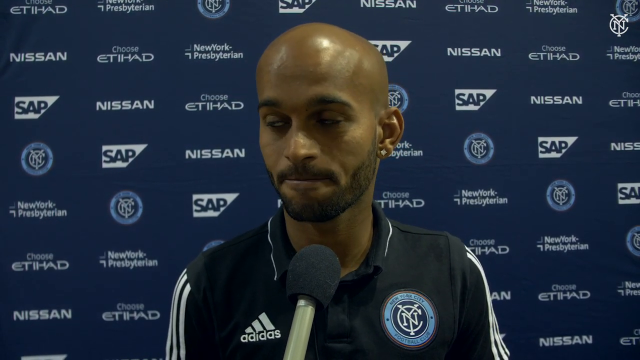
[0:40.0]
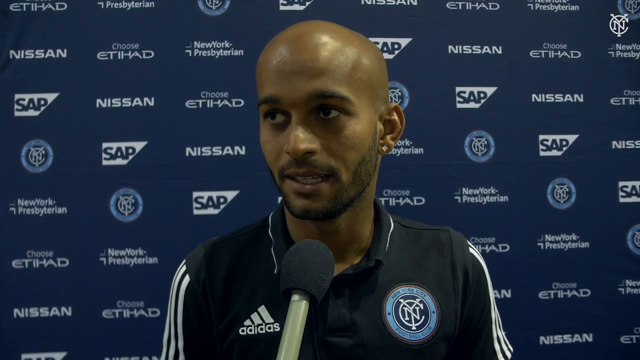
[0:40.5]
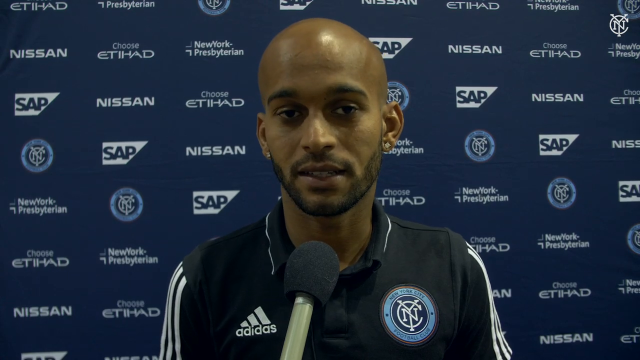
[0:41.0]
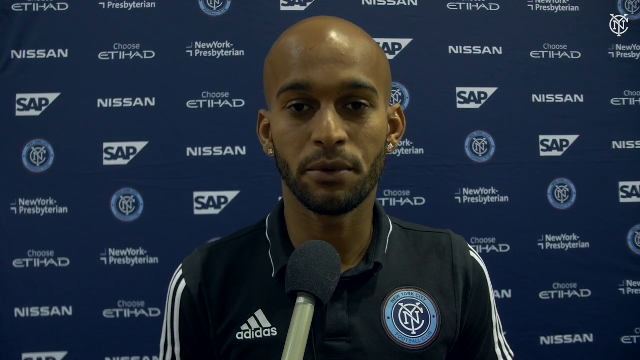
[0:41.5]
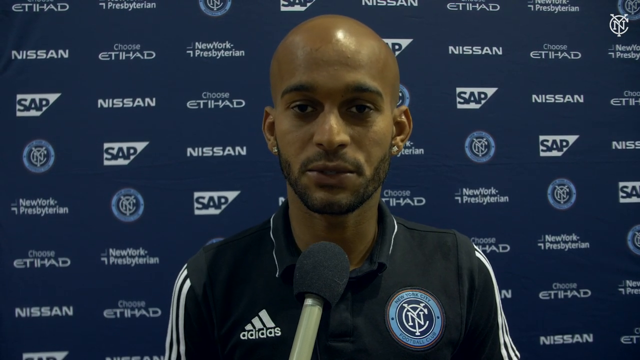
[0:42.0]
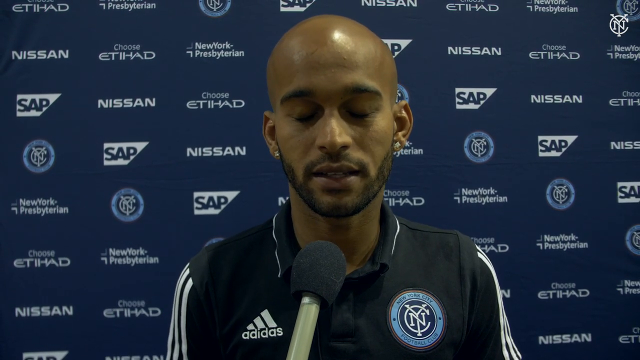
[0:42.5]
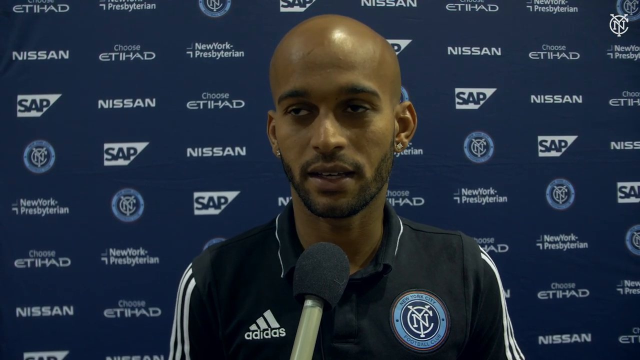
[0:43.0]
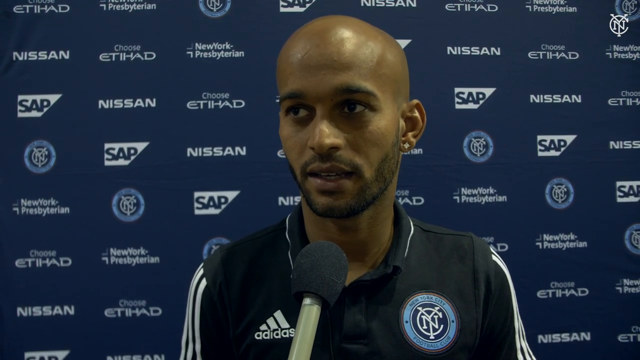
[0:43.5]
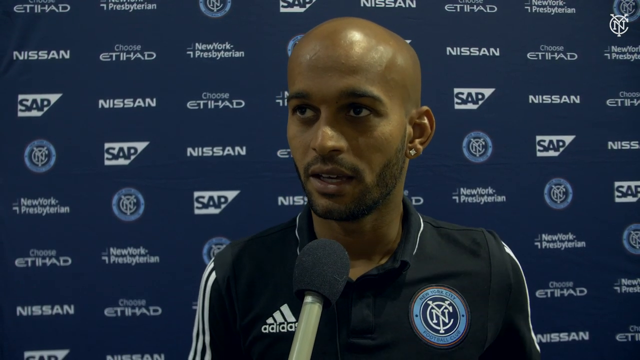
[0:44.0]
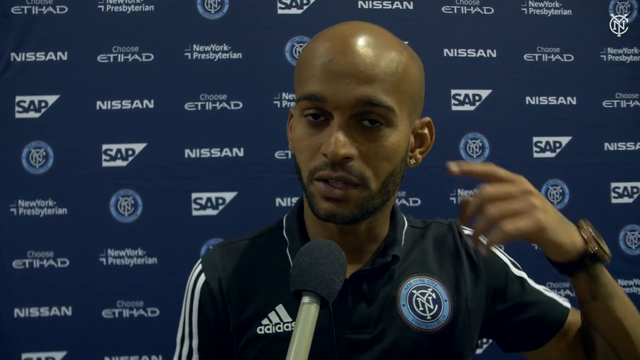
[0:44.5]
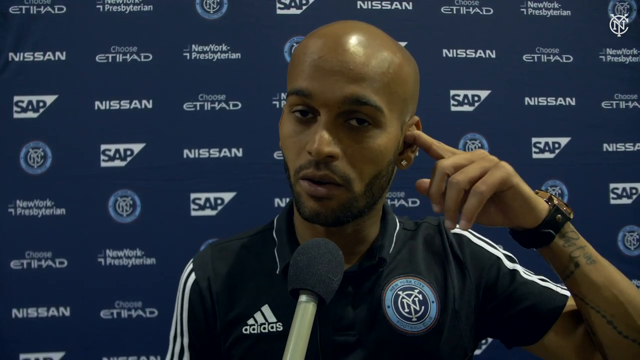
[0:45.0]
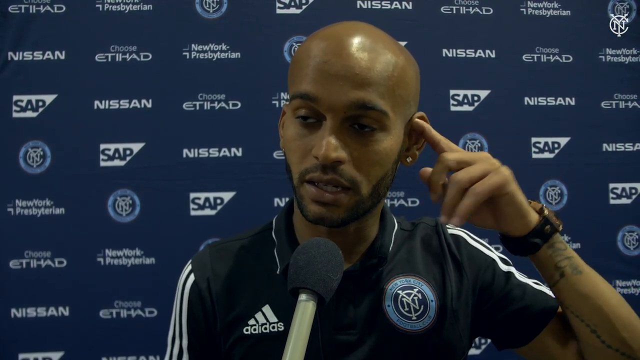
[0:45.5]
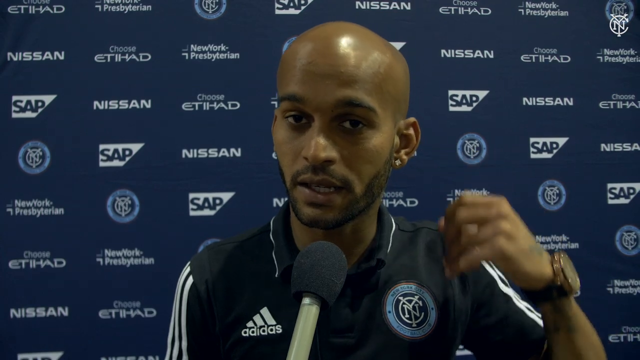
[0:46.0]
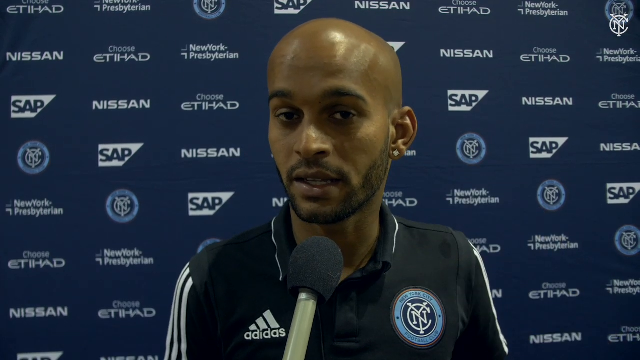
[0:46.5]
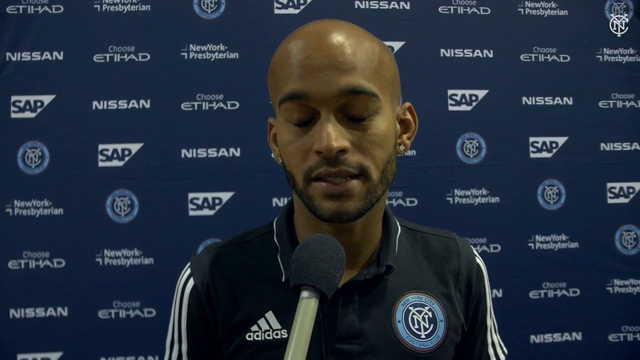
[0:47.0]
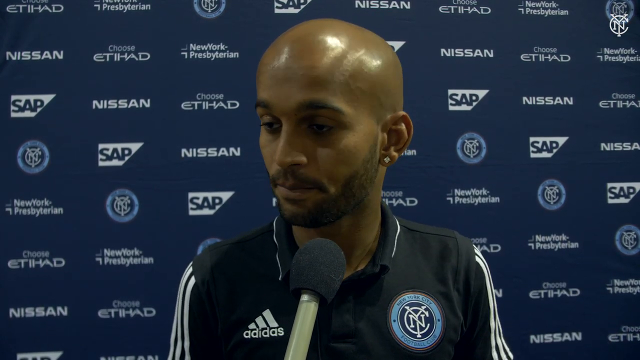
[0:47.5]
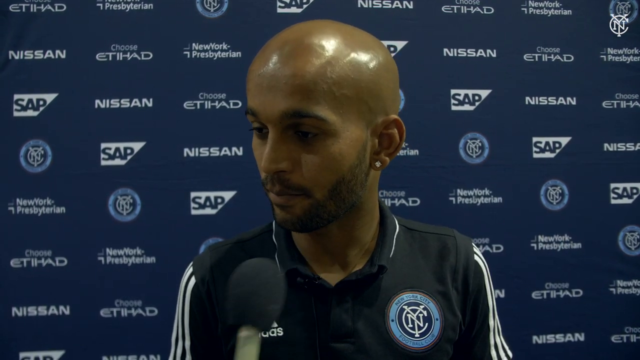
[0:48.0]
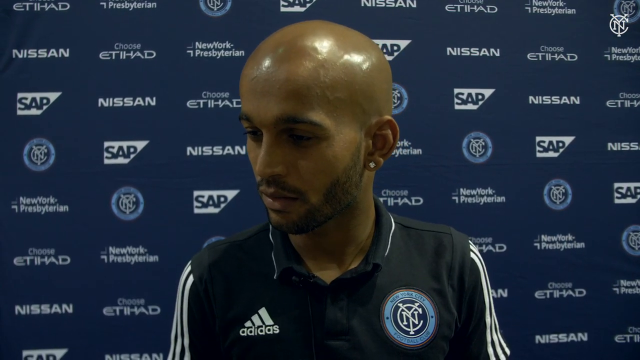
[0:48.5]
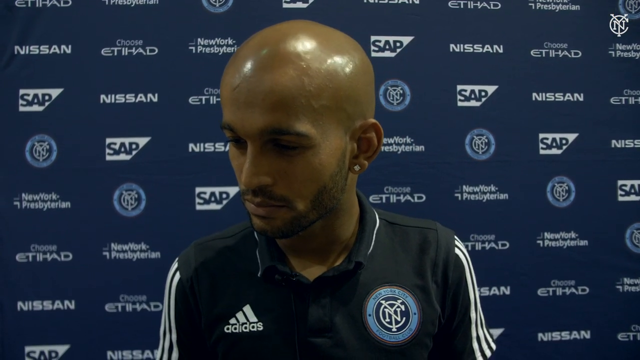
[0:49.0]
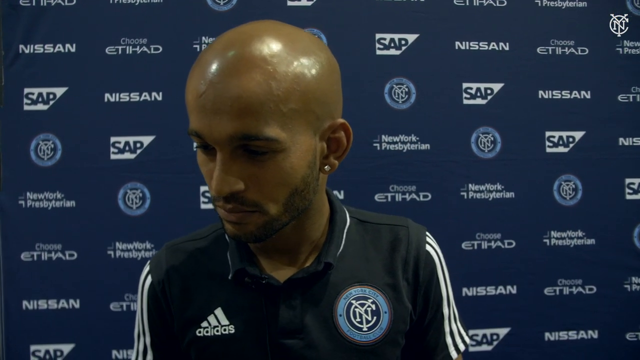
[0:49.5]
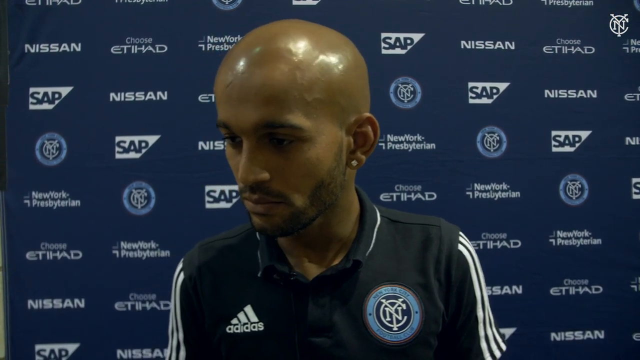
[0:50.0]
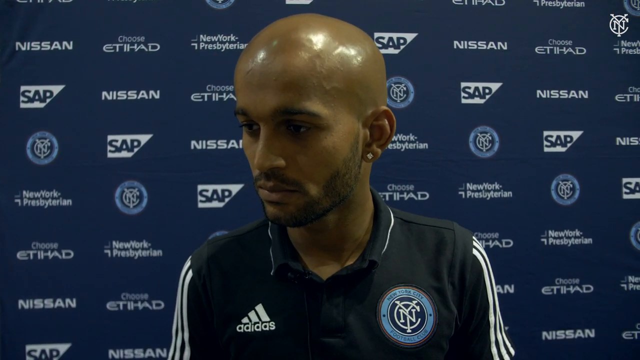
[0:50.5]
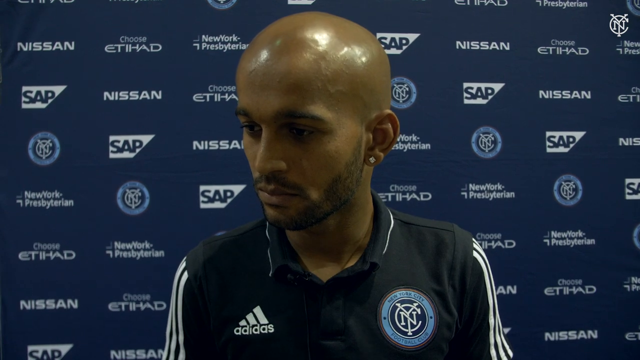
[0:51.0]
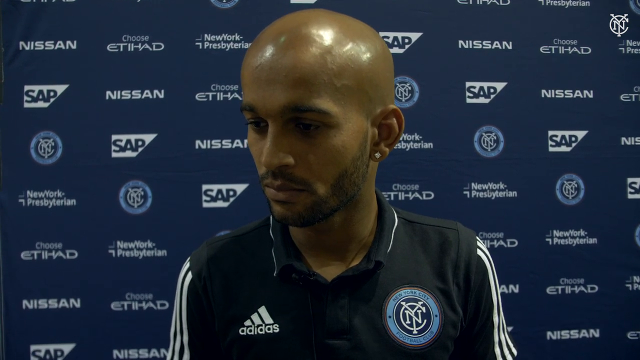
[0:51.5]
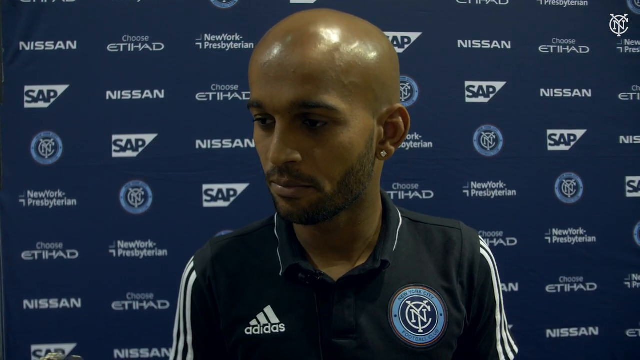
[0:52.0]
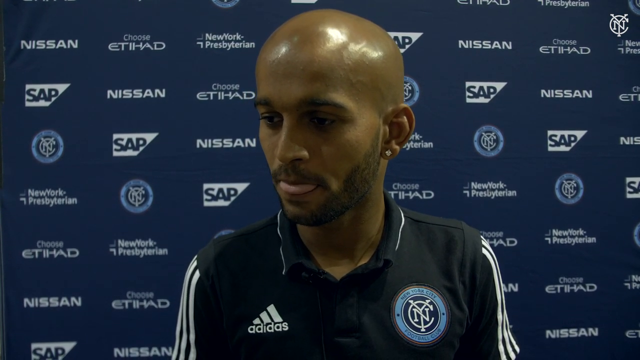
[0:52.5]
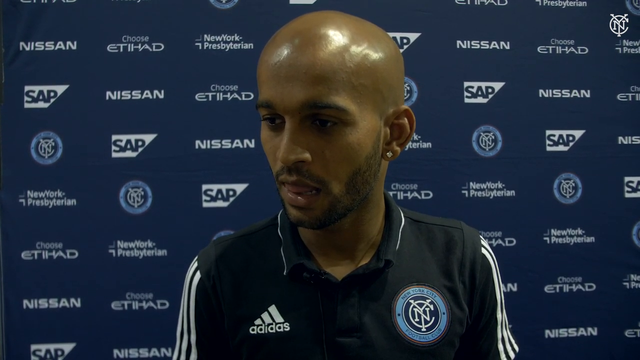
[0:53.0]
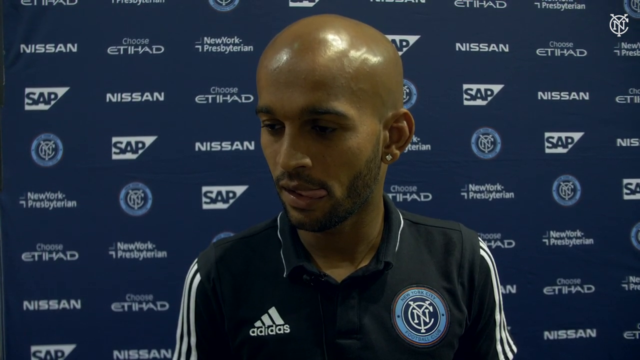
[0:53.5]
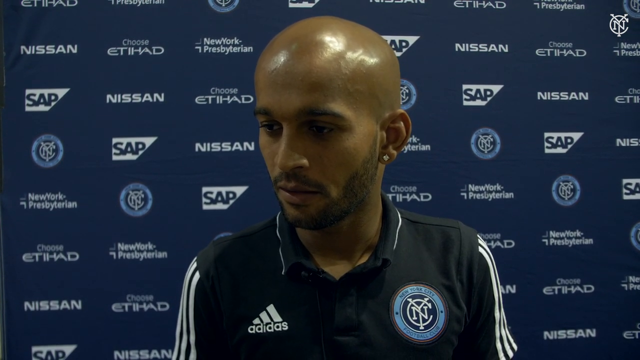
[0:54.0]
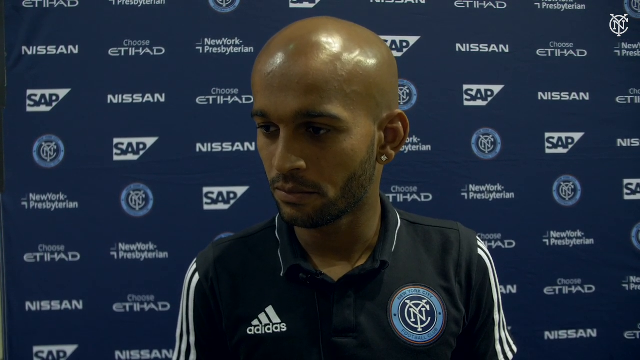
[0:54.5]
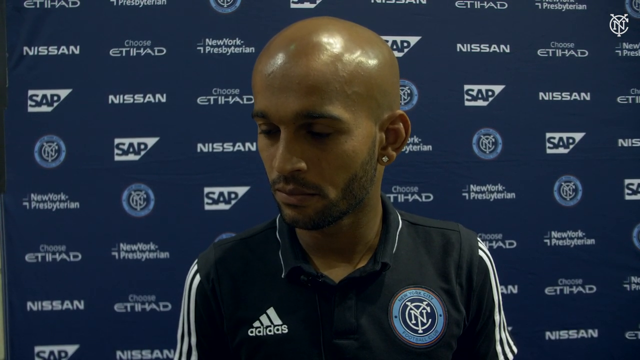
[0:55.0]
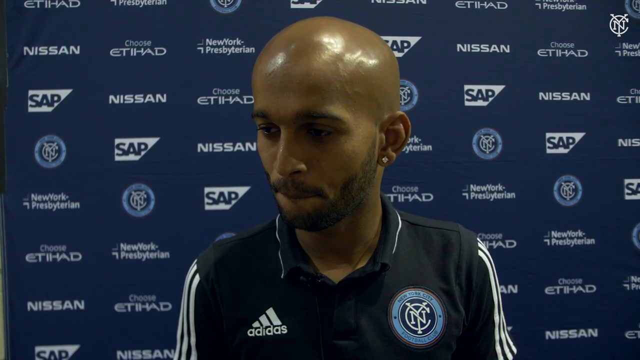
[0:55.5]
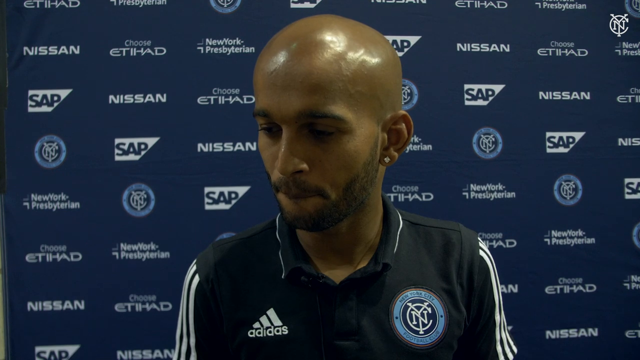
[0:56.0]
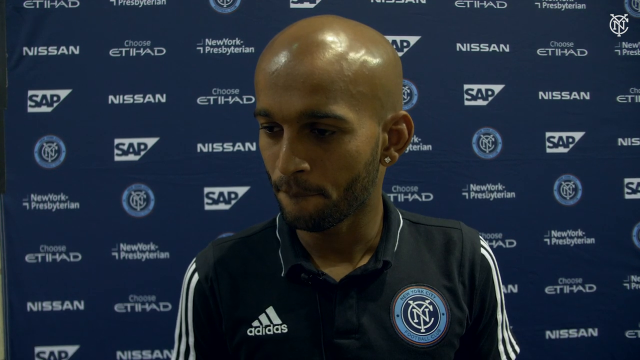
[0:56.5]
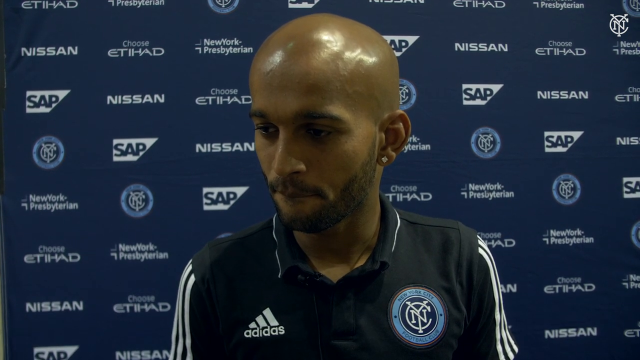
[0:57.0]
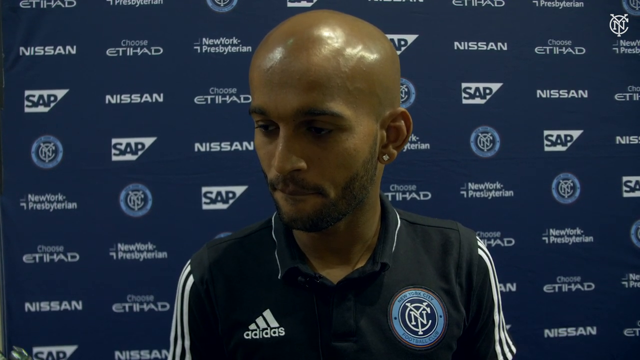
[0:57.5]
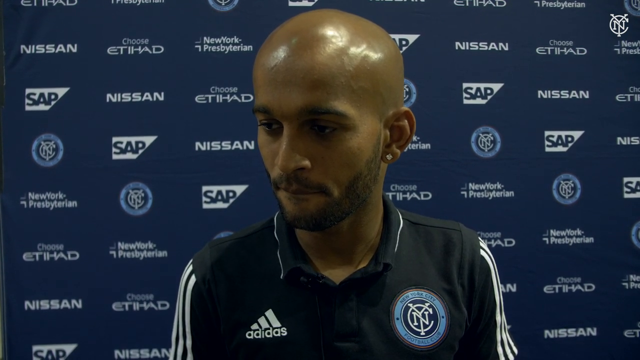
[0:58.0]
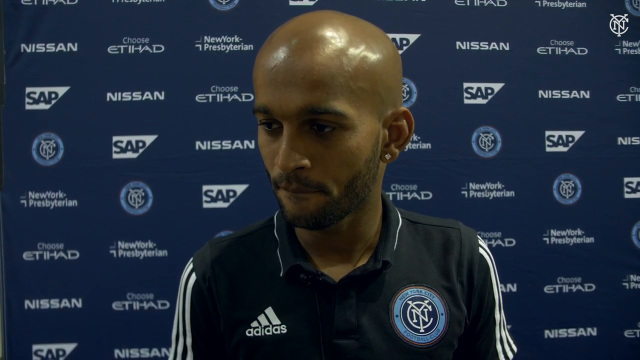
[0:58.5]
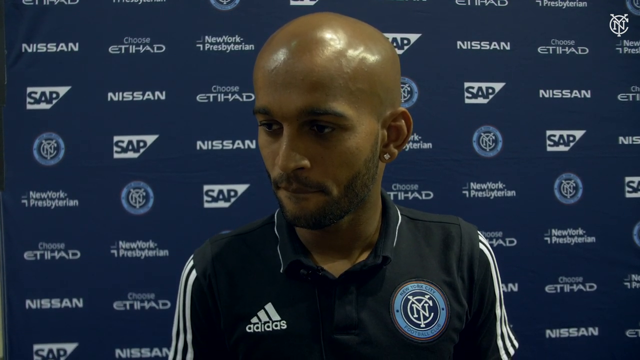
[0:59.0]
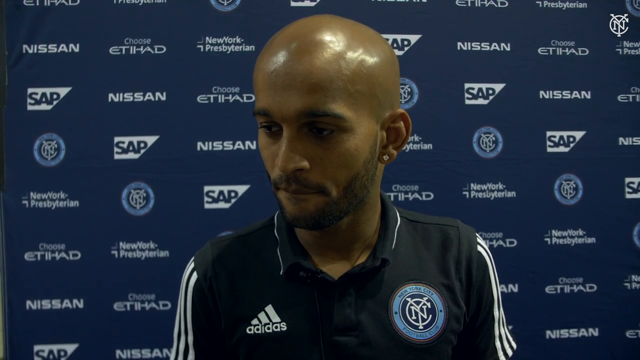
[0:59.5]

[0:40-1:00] A man is being interviewed; the person holding the microphone is out of view, and the microphone comes in from the middle bottom of the screen. The man is close to the camera, visible only from the center of his chest up. He speaks directly to the camera, slightly closes his eyes and kind of nods his head, then looks to his right side while speaking. He lifts his eyes to look upward and to the right. At one point he uses his left index finger to scratch the inside of his left ear; he wears a watch on his left wrist. He lowers his arm out of view, speaks directly to the camera, closes his eyes, then looks to his right. The microphone disappears as the man kind of leans in to hear what is being said to him, and he nods slightly.